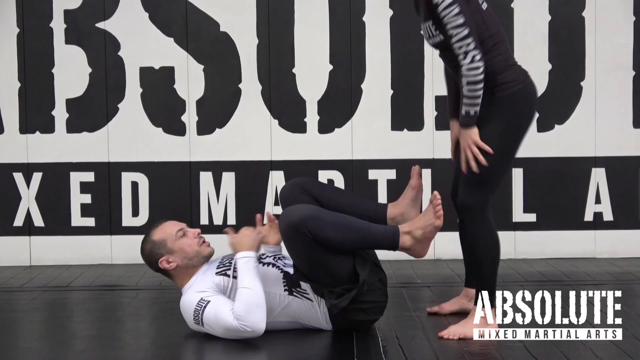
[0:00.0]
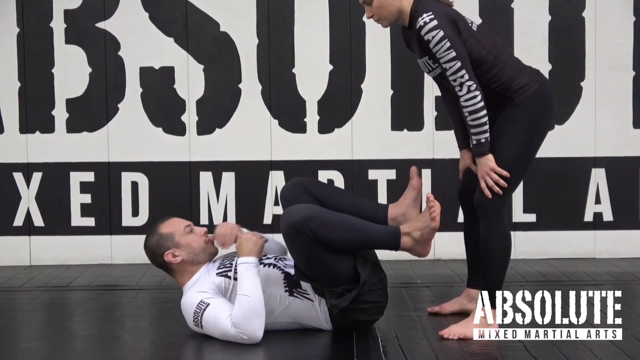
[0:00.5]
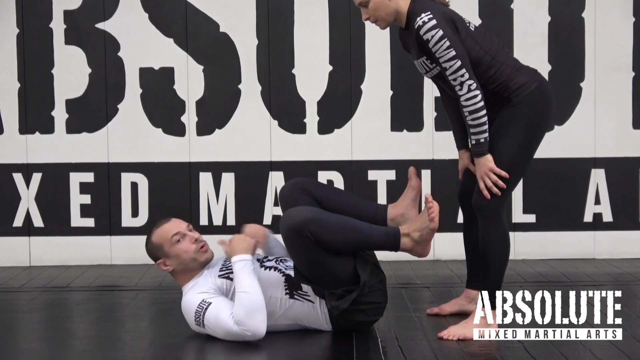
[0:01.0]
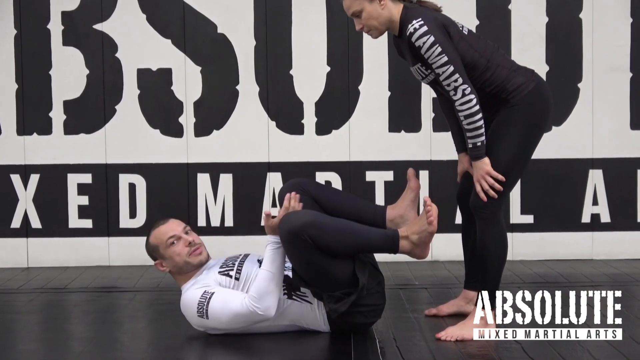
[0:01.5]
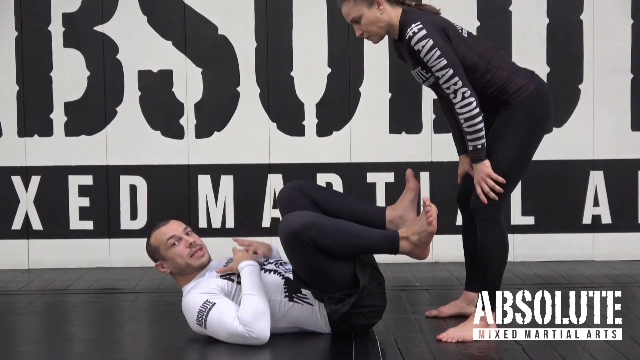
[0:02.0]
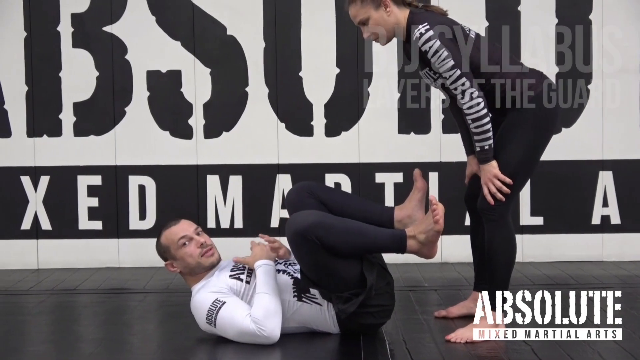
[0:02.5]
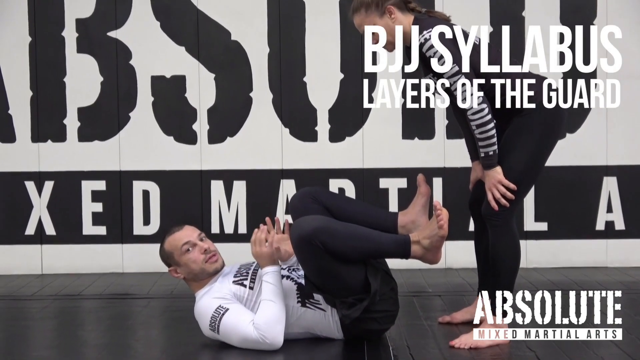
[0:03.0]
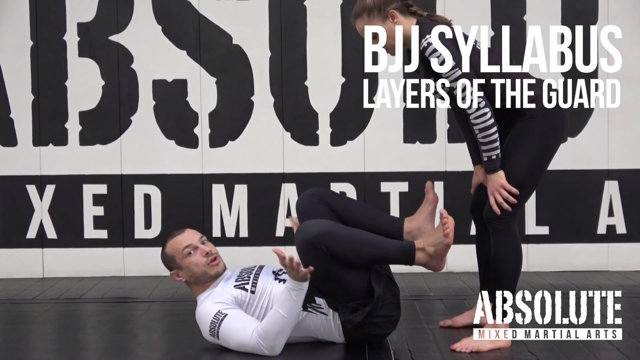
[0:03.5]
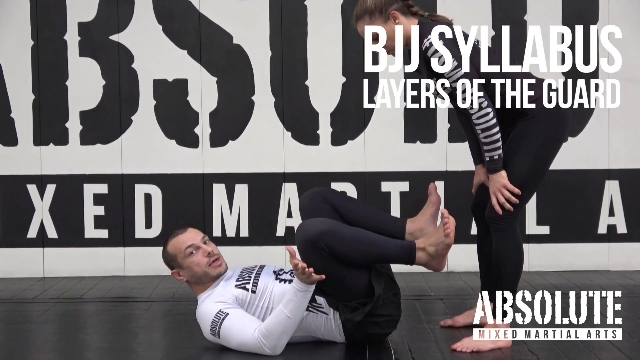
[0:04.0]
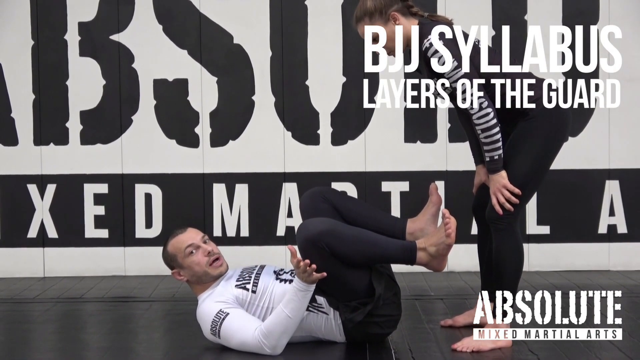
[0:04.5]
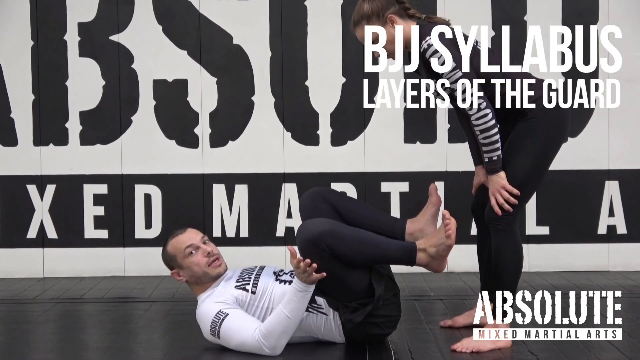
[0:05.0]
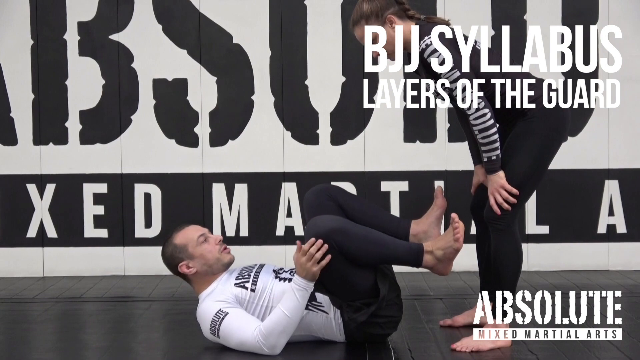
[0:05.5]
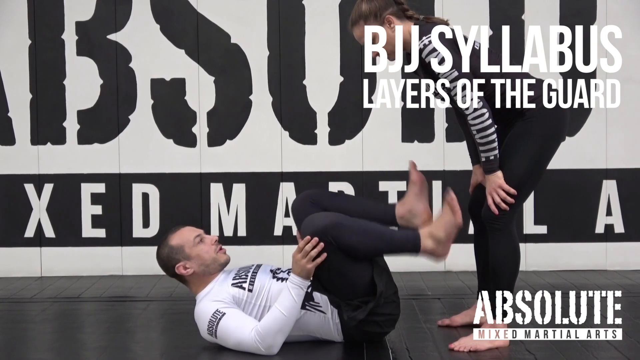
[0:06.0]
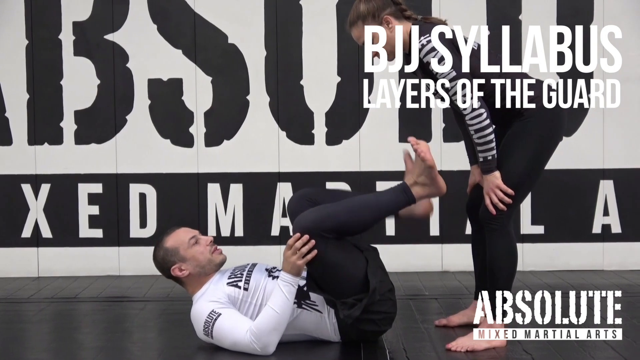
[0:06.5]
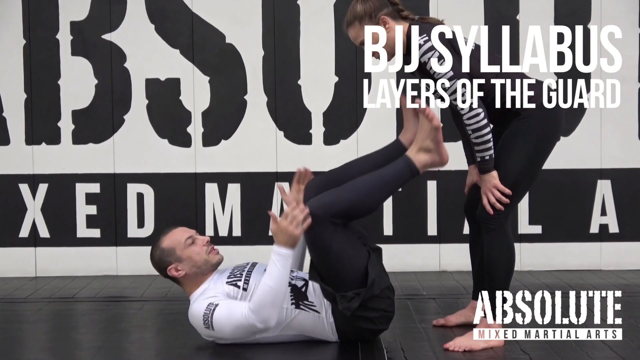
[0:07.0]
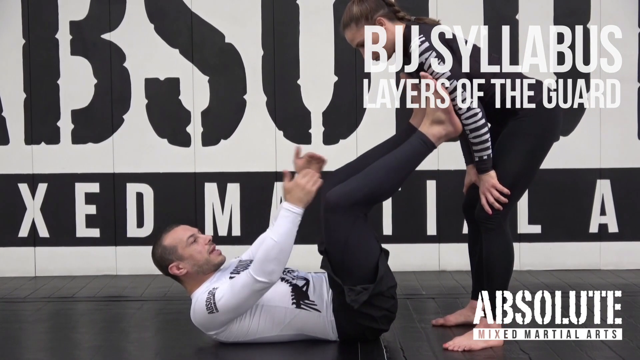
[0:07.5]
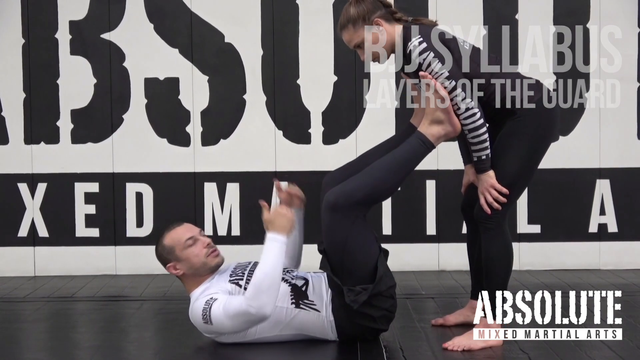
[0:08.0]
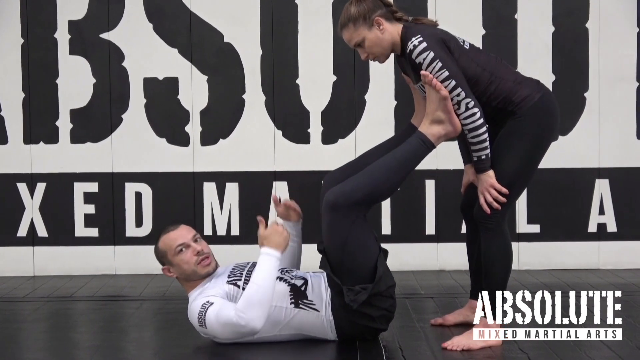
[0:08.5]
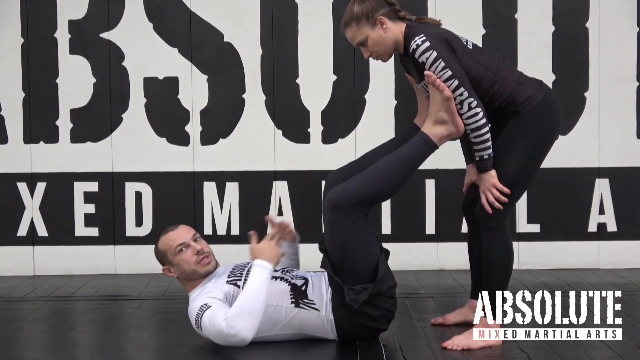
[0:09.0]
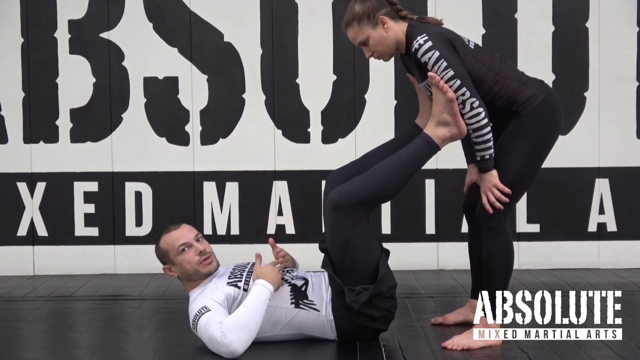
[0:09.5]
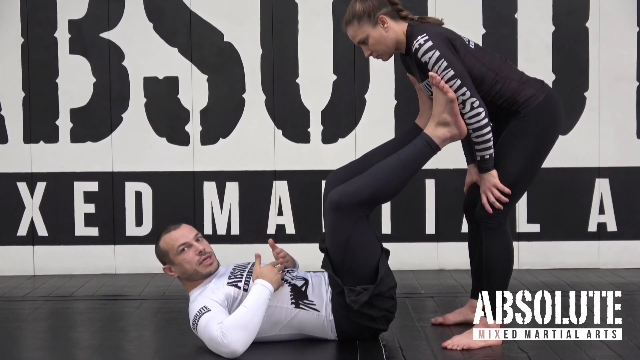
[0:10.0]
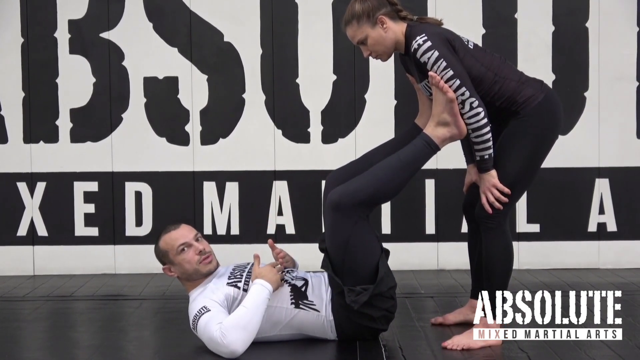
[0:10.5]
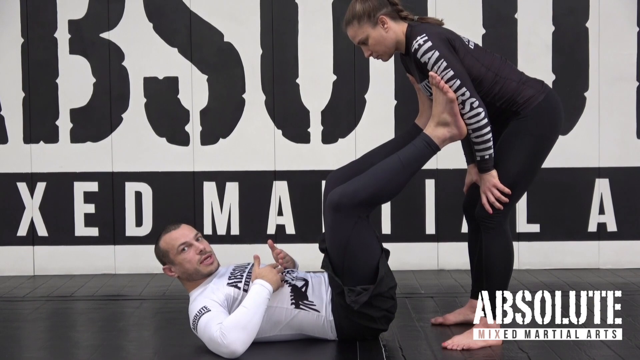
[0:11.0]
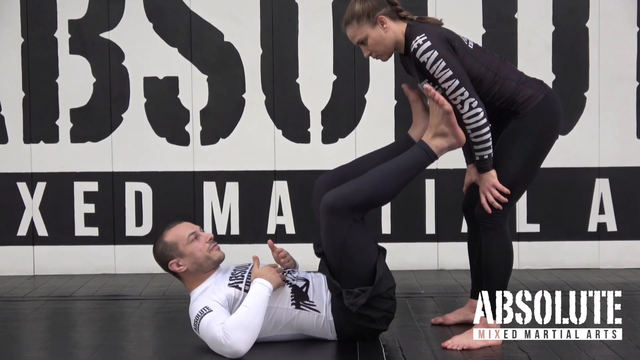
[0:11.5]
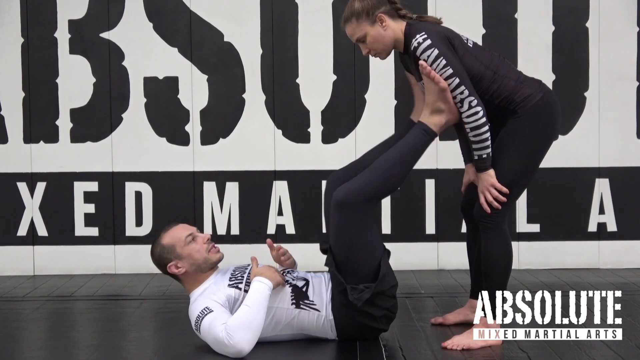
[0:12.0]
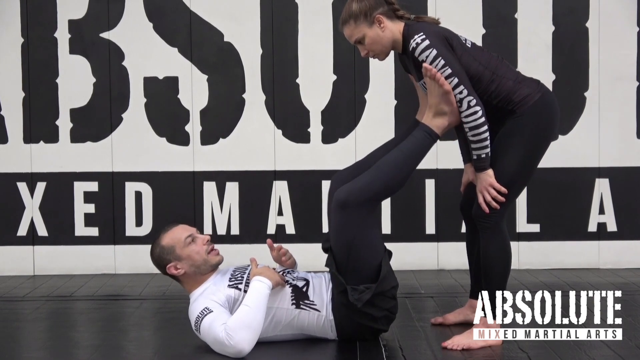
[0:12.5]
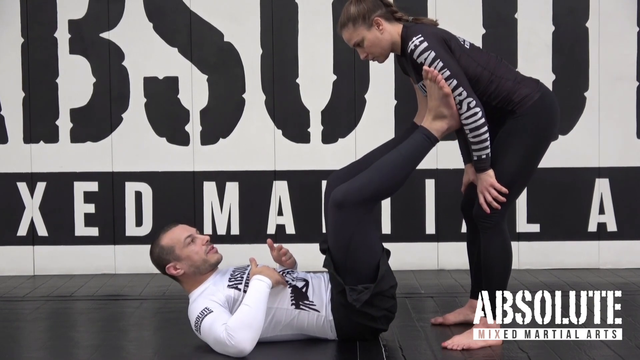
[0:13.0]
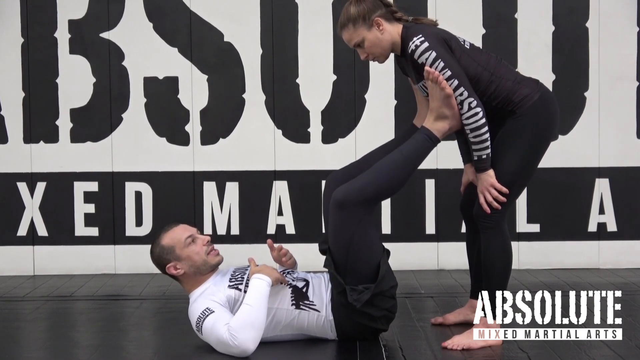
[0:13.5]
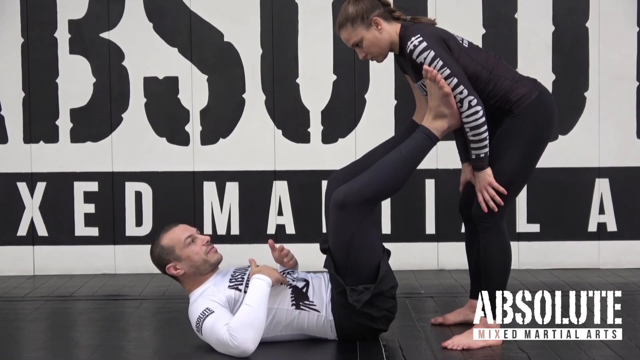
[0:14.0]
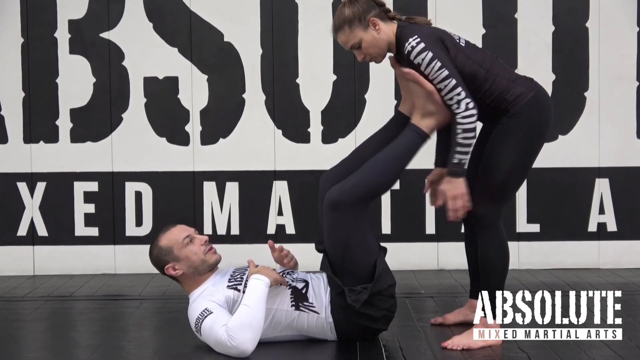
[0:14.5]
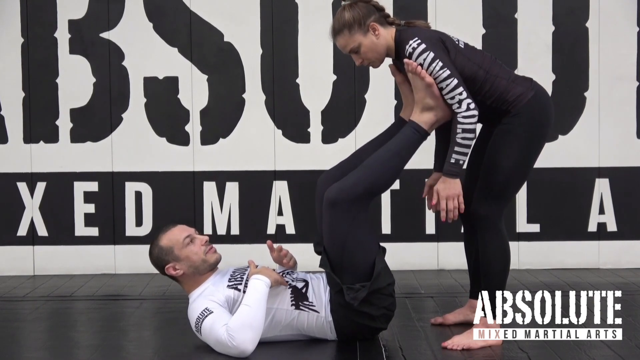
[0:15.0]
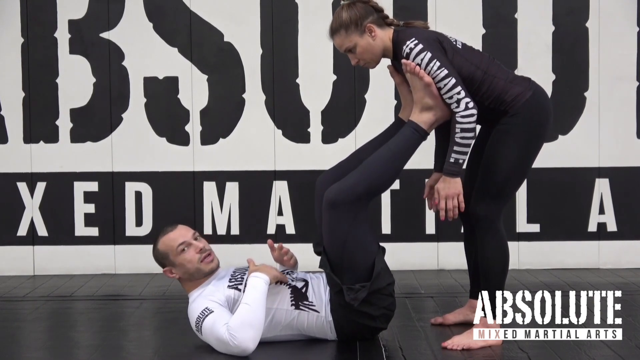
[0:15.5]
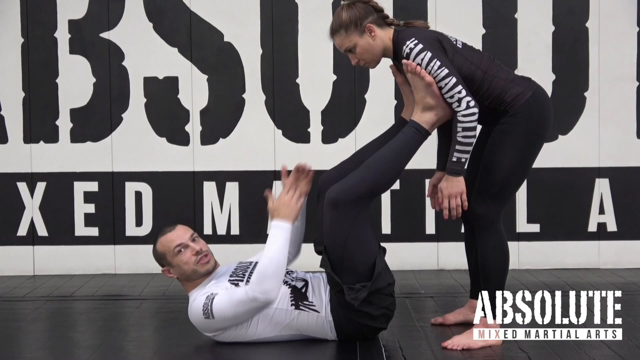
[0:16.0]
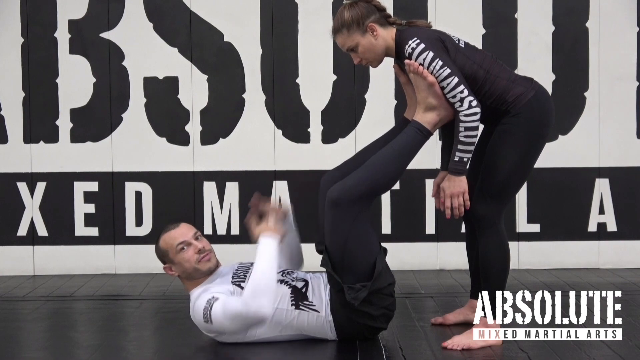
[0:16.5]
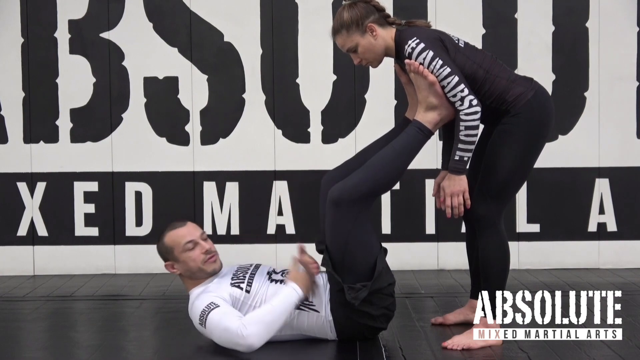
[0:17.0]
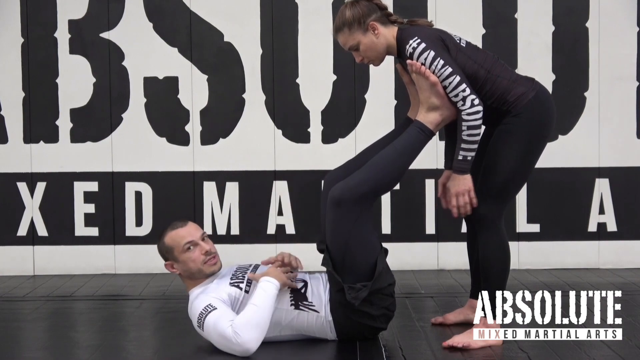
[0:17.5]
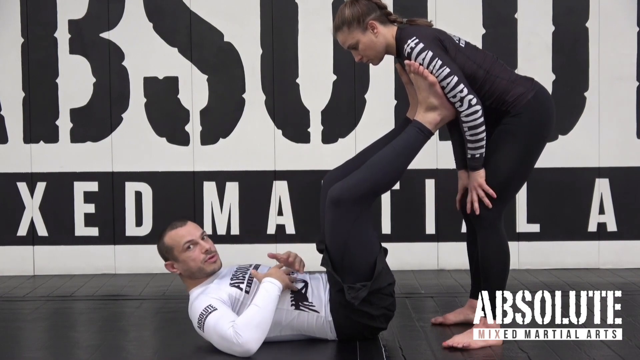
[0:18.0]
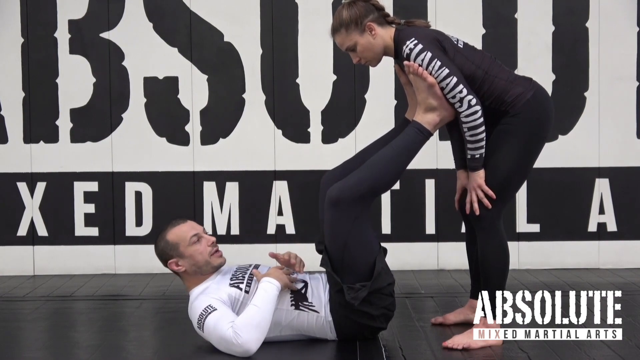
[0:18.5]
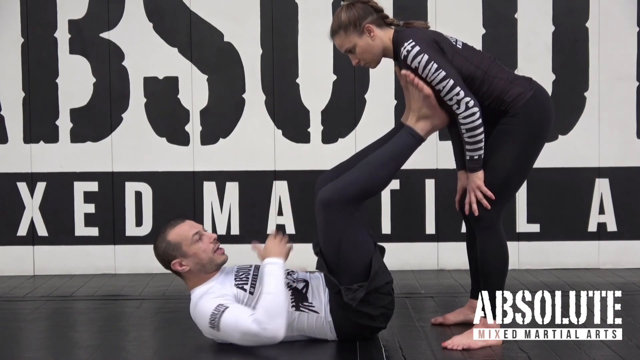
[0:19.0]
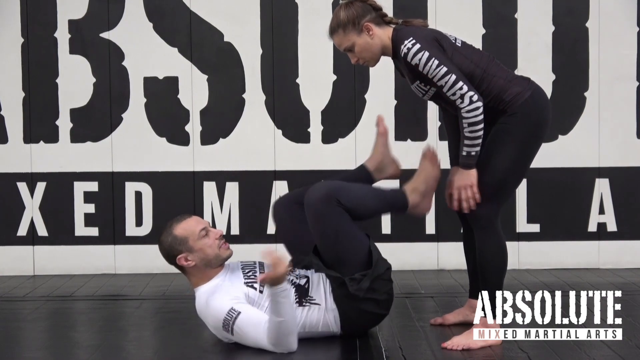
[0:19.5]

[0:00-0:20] Two people are visible: a man lying on his back and a woman standing over him, both white. The man wears tight black spandex pants and a white spandex top with black markings; his knees are bent and his feet are flat vertically. As the video pans up, a message about BJJ appears on screen. The man raises his feet and places them on the woman's arms. She is bent over at the waist, standing above his knees, which face upward, and looks down at him. The woman wears an all-black outfit: black spandex pants and a black top with white writing on it. The man talks to the woman and looks over at the camera, seemingly giving instruction to the camera; it seems like it could be some type of BJJ lesson. He moves his hands as he speaks, then moves his arms down and changes his position slightly. In the background is a white padded wall with black writing, and they are on a black matted floor.